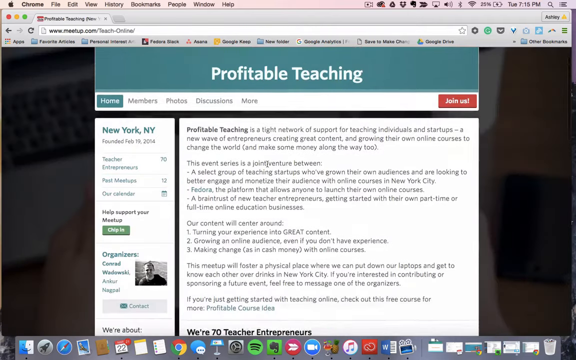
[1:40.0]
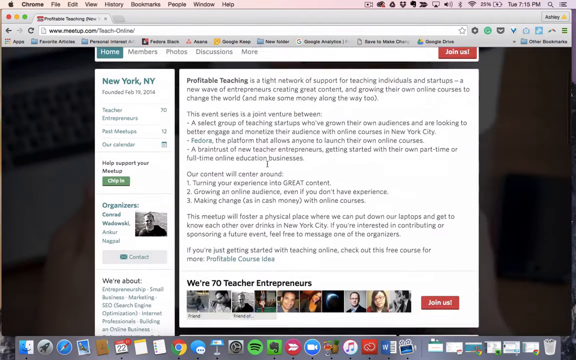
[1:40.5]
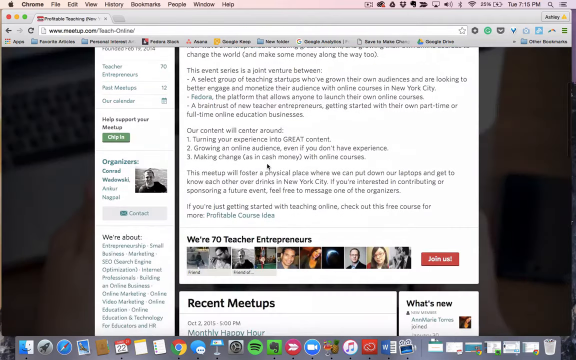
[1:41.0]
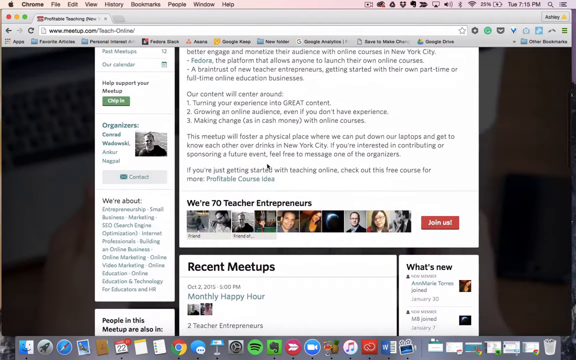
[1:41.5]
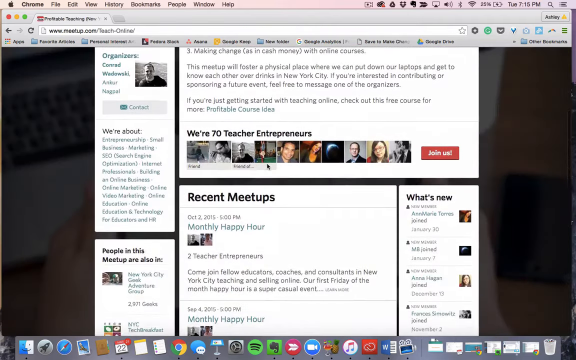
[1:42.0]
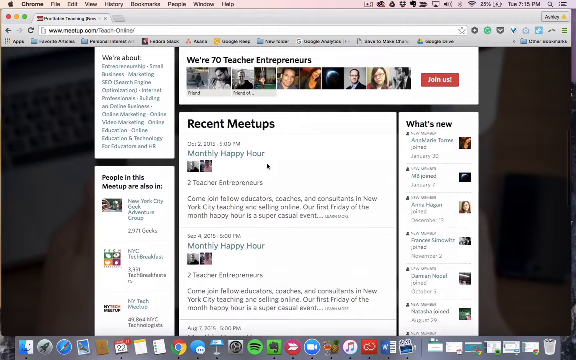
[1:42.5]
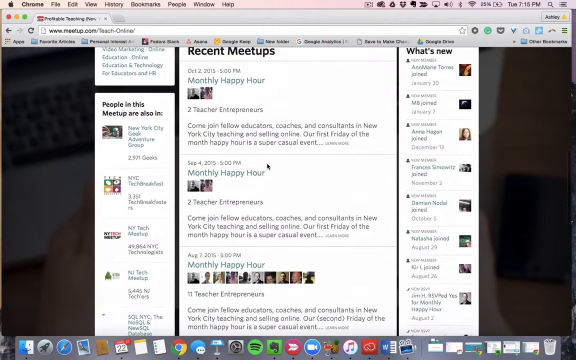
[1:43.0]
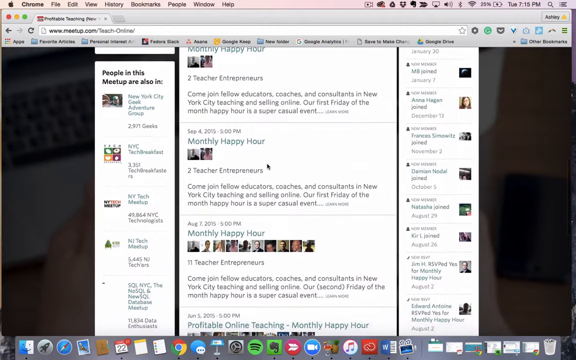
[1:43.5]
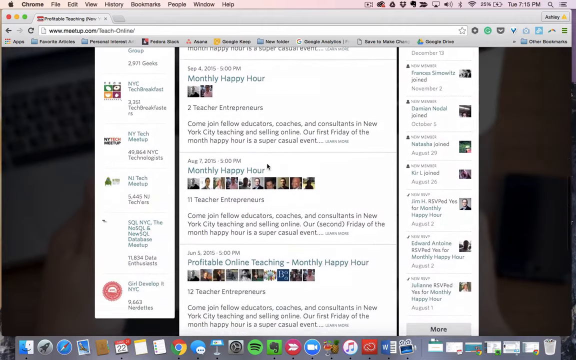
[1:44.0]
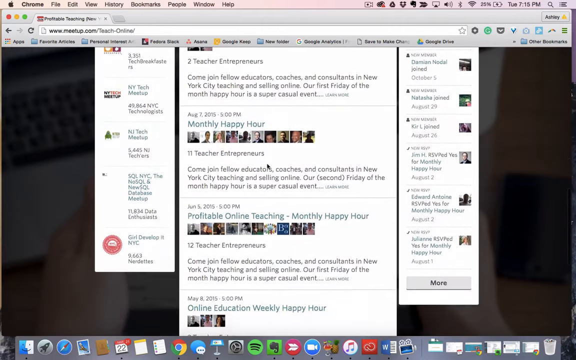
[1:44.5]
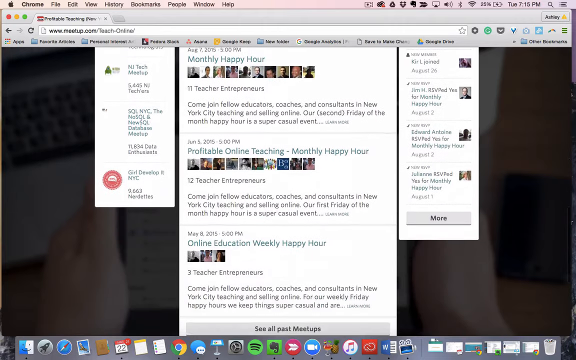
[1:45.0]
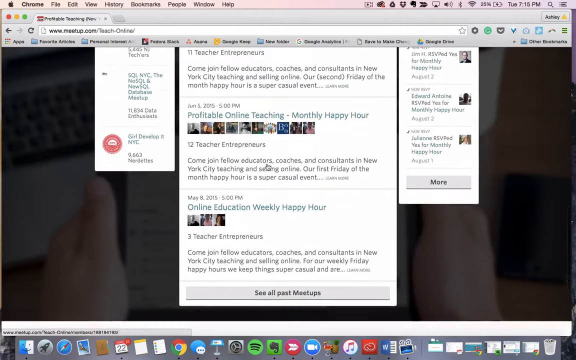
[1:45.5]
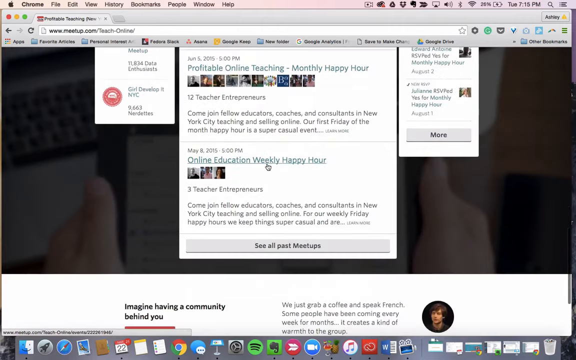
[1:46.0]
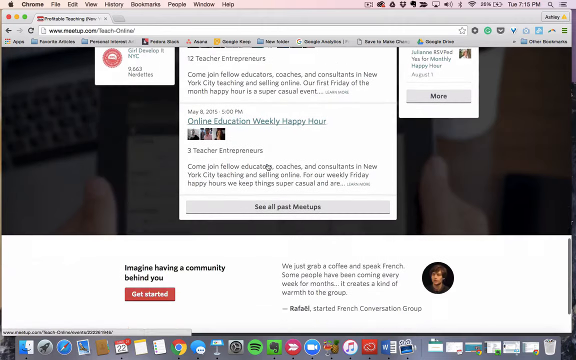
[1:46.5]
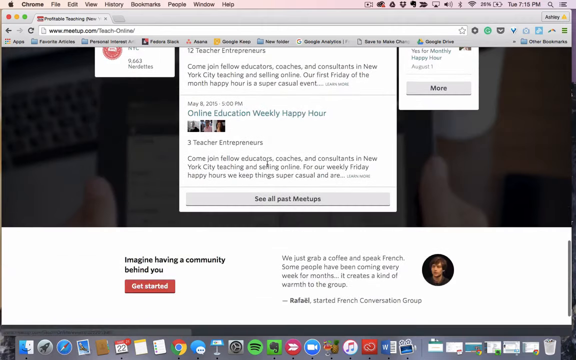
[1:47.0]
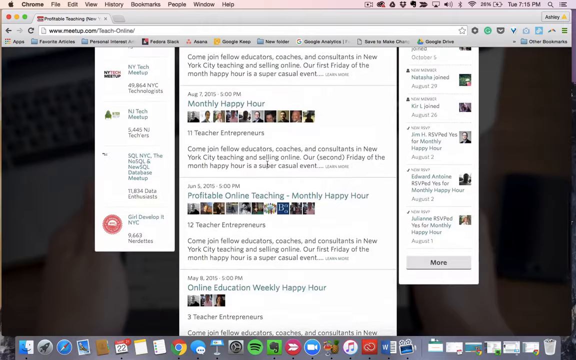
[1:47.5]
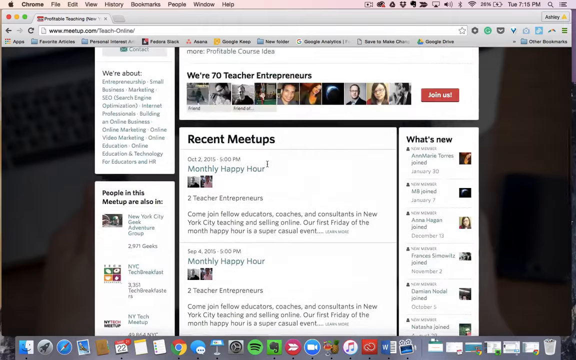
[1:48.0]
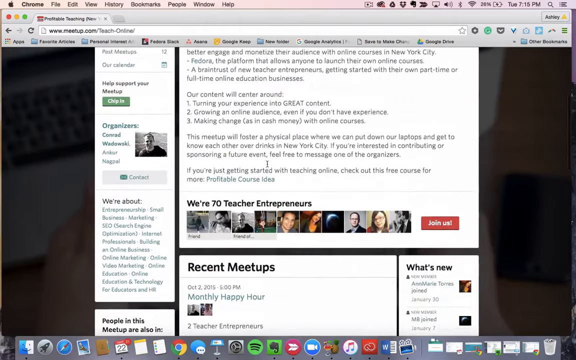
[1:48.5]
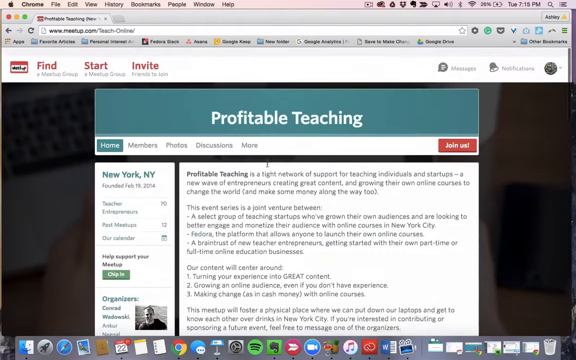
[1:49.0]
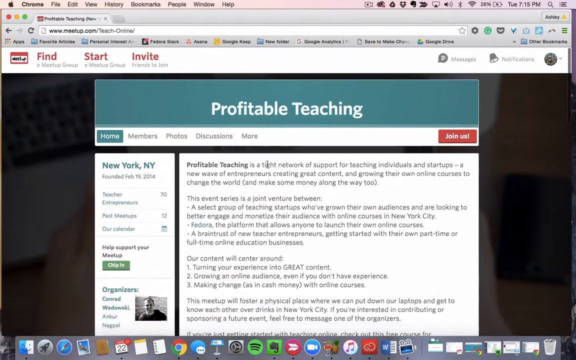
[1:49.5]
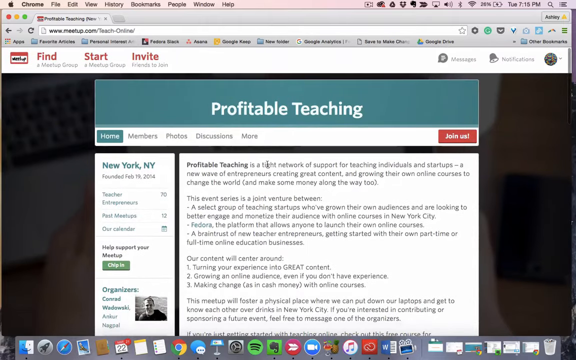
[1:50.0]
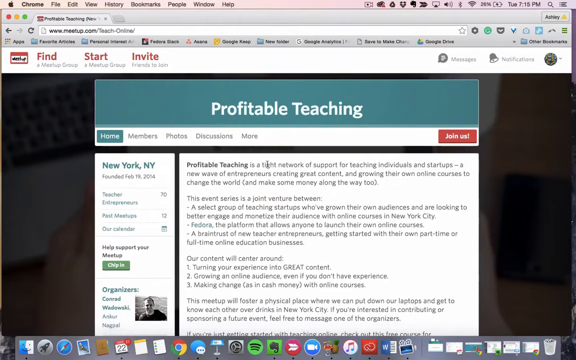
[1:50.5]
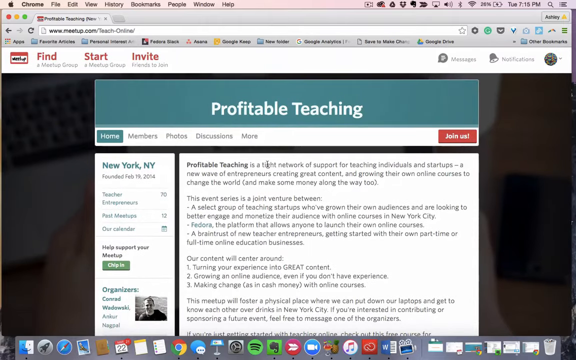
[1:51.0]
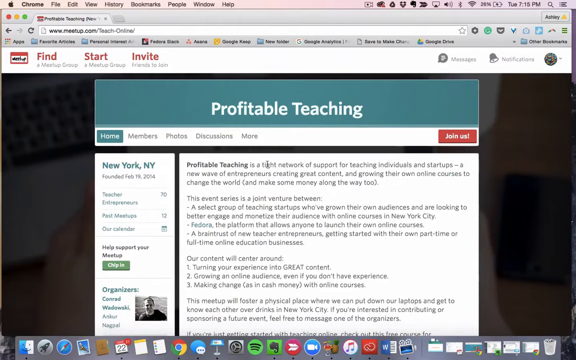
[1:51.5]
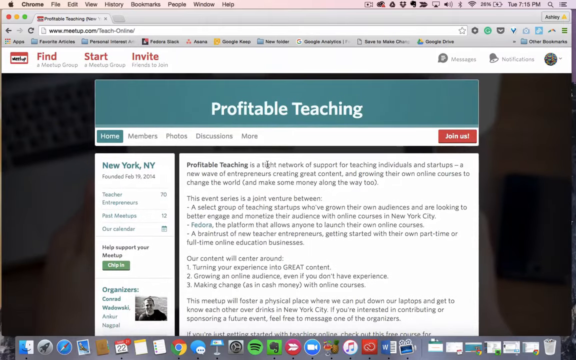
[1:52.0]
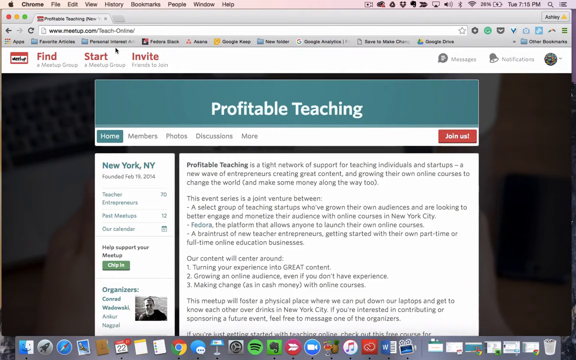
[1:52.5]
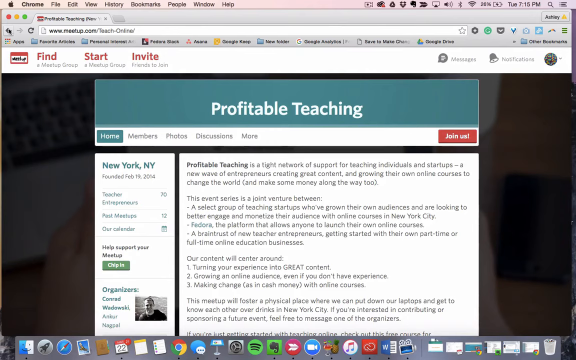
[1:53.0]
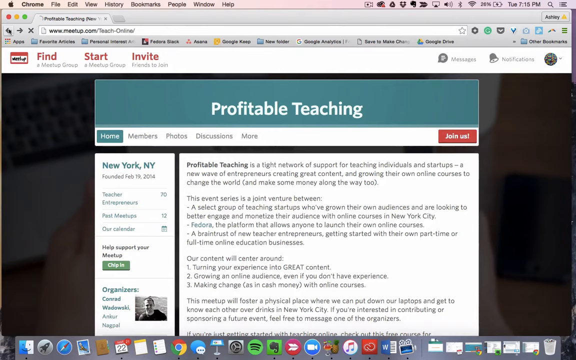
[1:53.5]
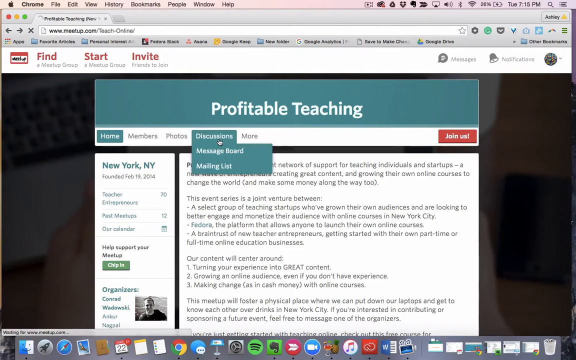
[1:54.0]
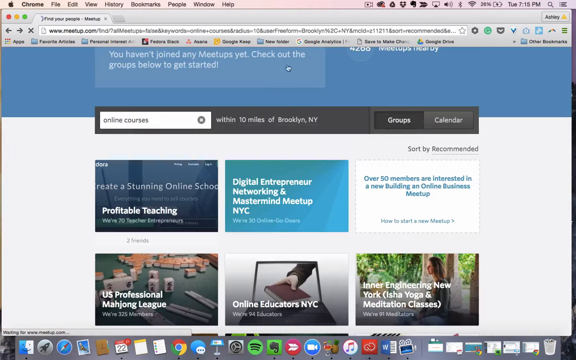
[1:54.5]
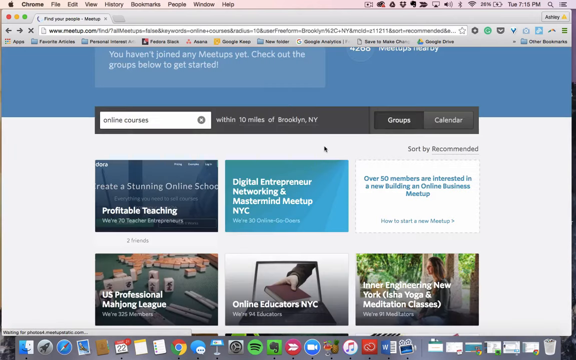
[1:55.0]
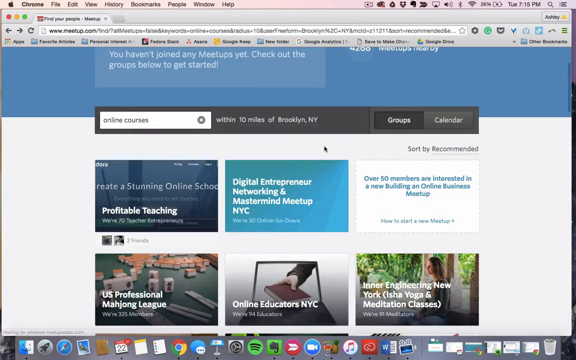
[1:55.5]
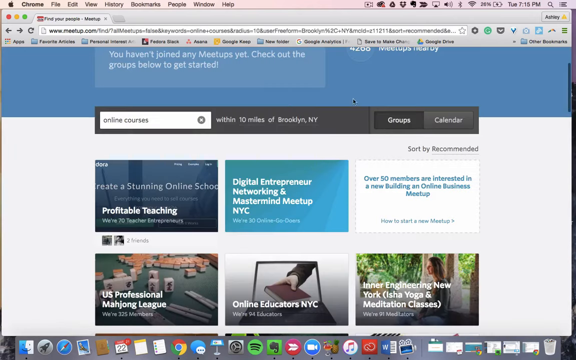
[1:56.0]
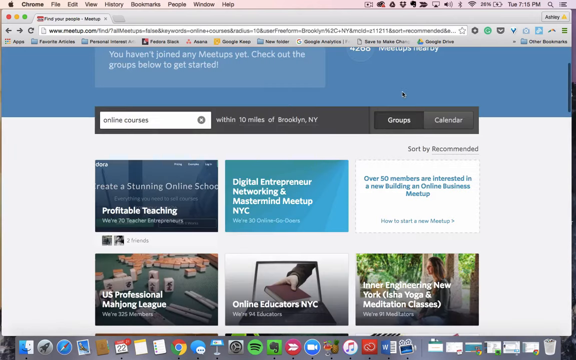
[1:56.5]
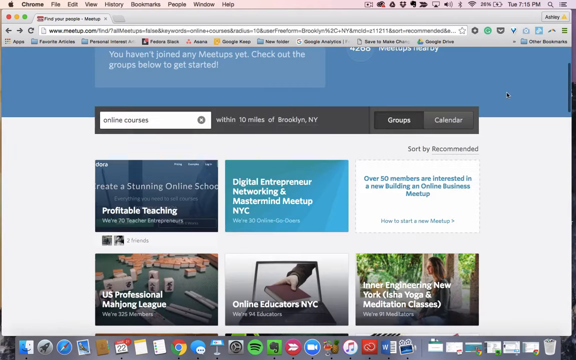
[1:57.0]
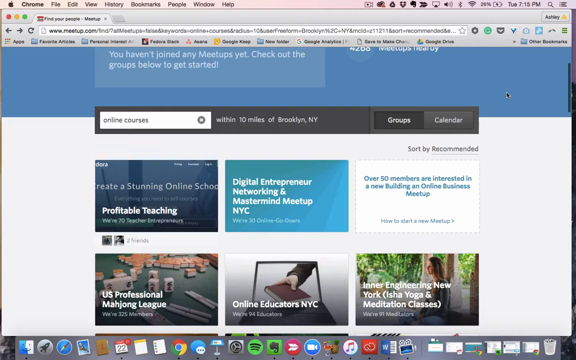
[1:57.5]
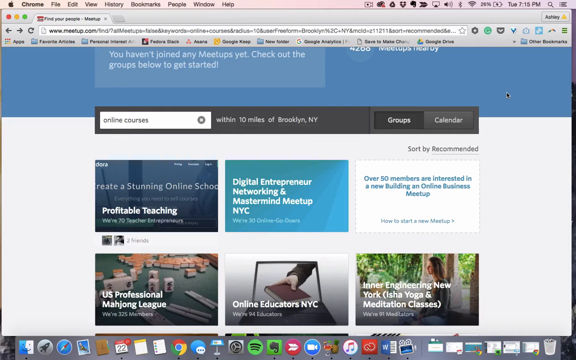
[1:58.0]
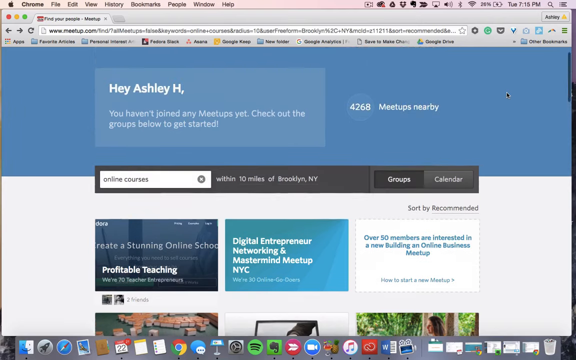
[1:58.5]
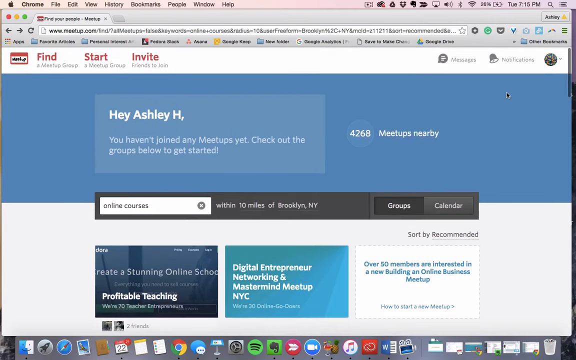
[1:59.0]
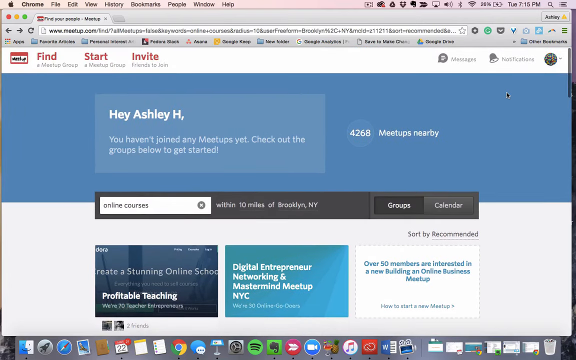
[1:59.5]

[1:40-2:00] The Profitable Teaching page opens, with Profitable Teaching written in blue, "New York NY" written, and "Profitable Teaching" in bold black letters. Next to it is information about Profitable Teaching. Below, text reads "we are 70 teacher entrepreneurs", and below that are images of different people and "join us" written in a red text box. Below that is "recent". As the user scrolls down, recent meetups are shown, with text and images. The user then scrolls back up to the Profitable Teaching section, exits it, and returns to the page of online courses search results.